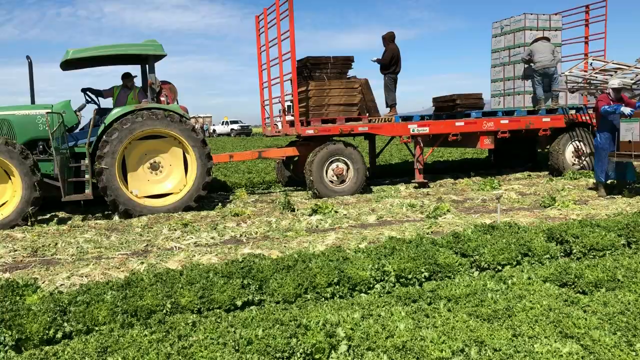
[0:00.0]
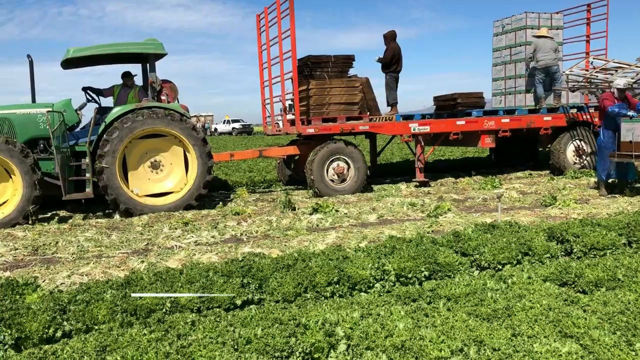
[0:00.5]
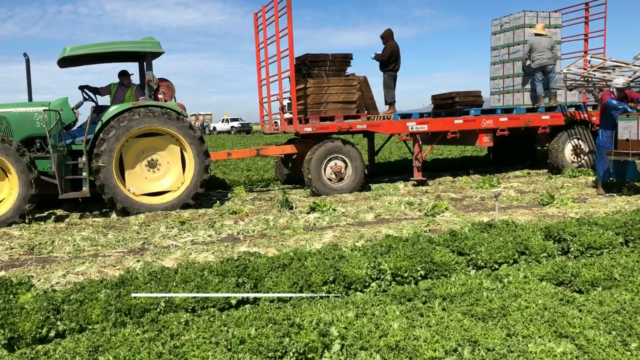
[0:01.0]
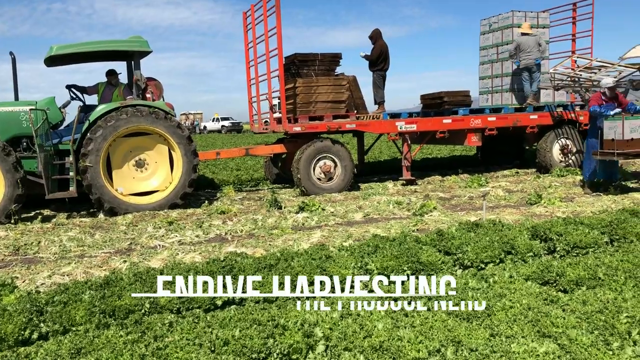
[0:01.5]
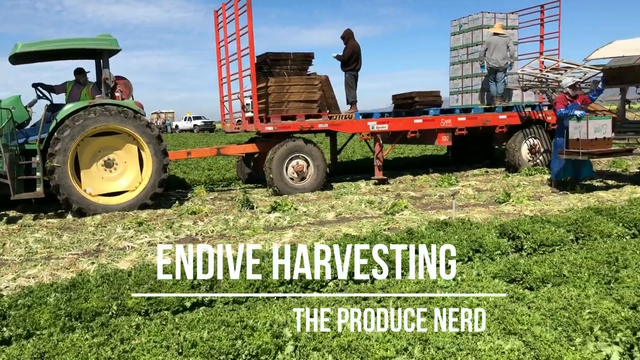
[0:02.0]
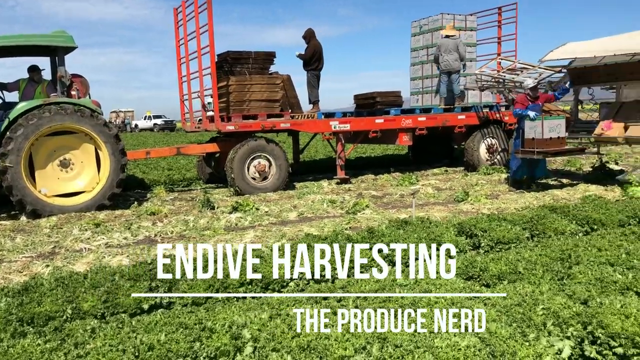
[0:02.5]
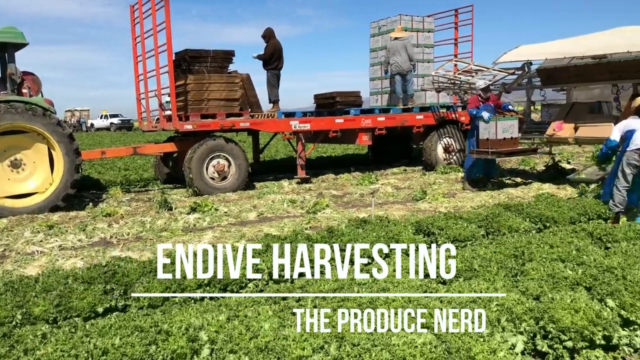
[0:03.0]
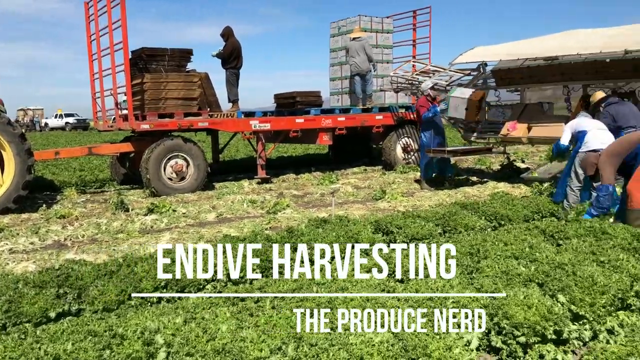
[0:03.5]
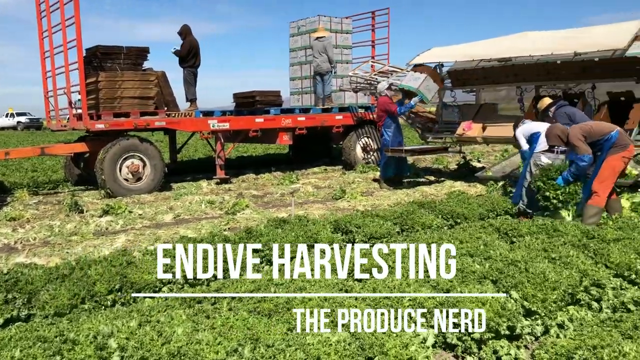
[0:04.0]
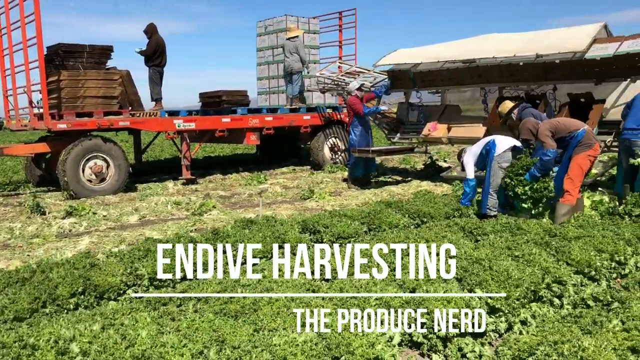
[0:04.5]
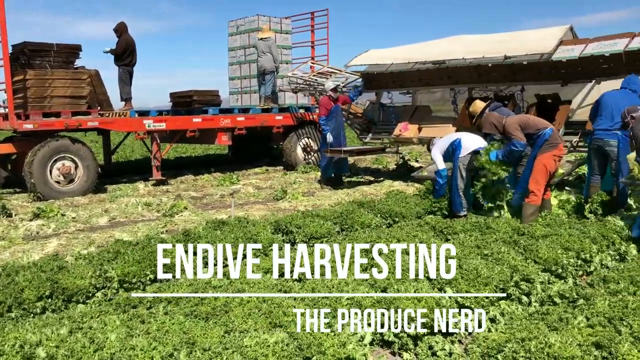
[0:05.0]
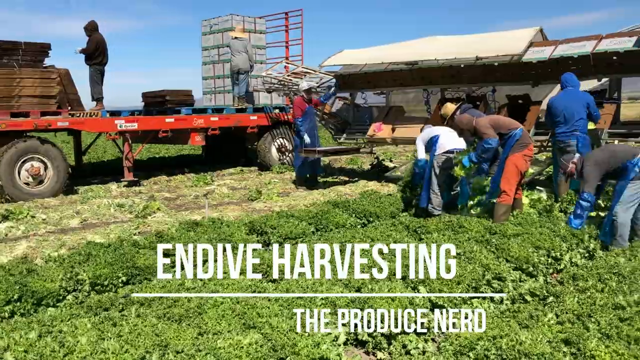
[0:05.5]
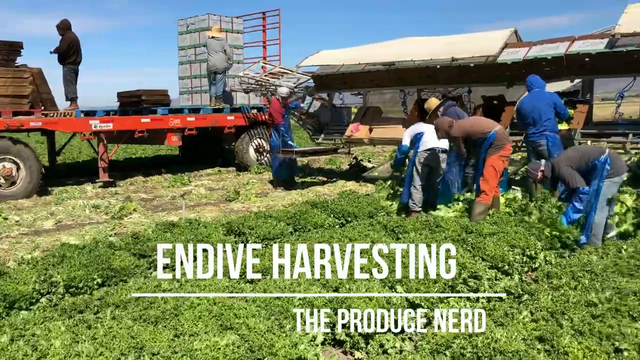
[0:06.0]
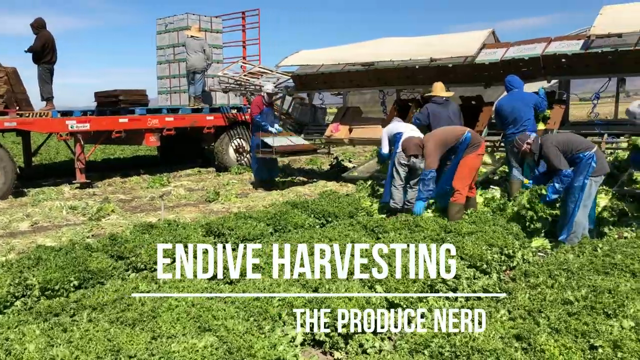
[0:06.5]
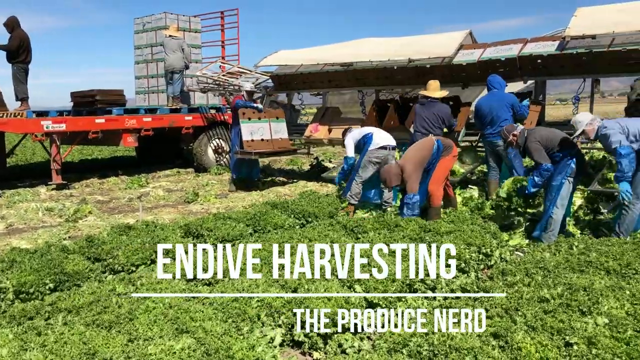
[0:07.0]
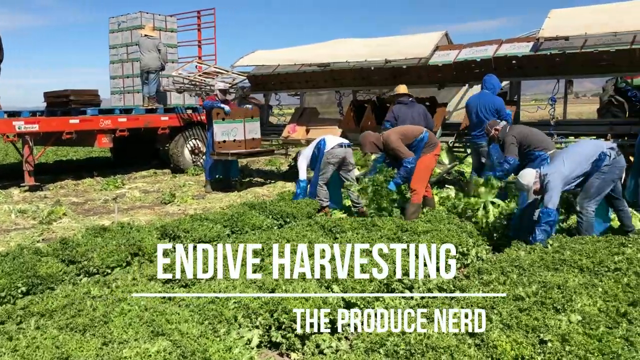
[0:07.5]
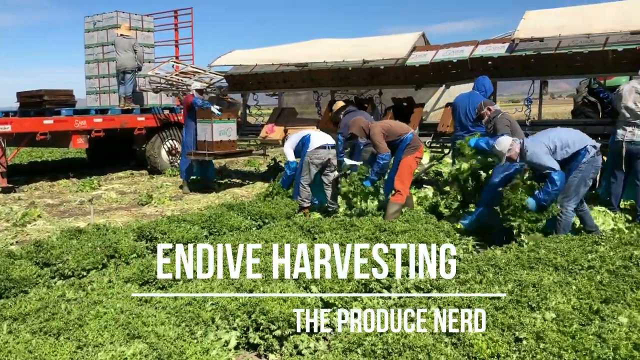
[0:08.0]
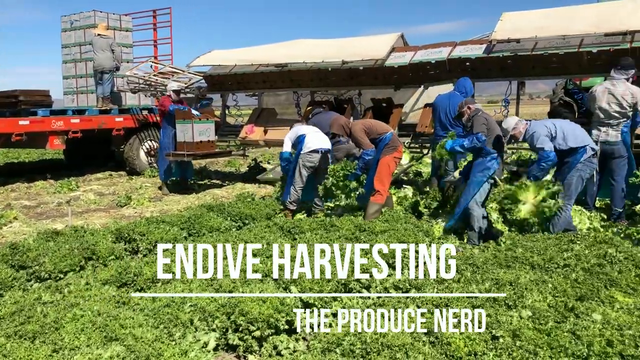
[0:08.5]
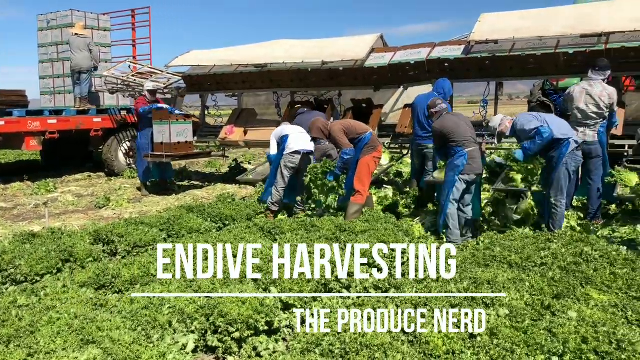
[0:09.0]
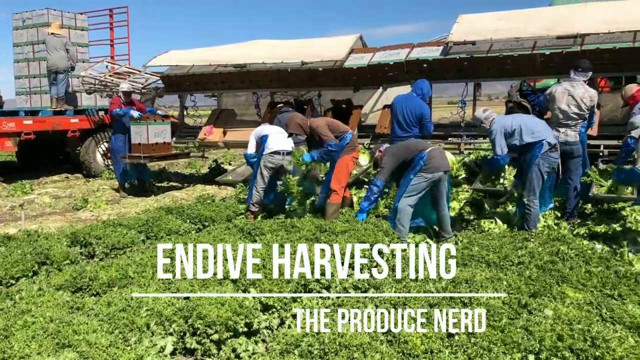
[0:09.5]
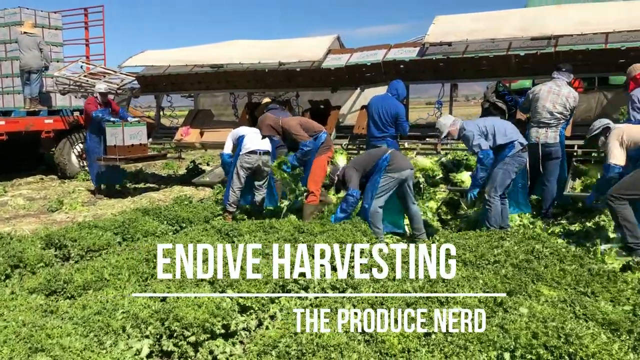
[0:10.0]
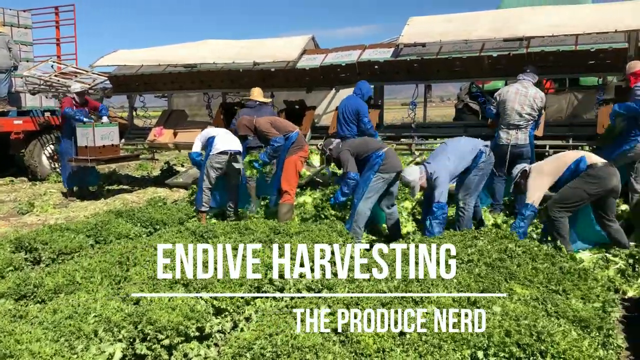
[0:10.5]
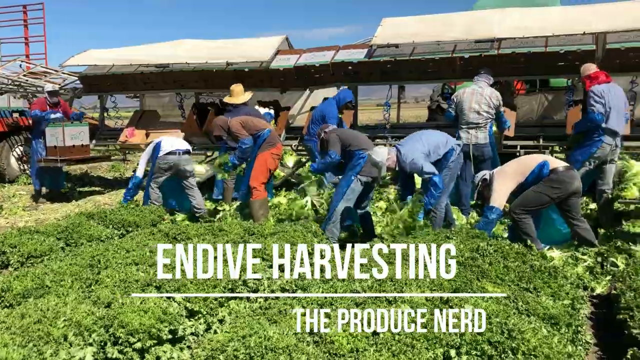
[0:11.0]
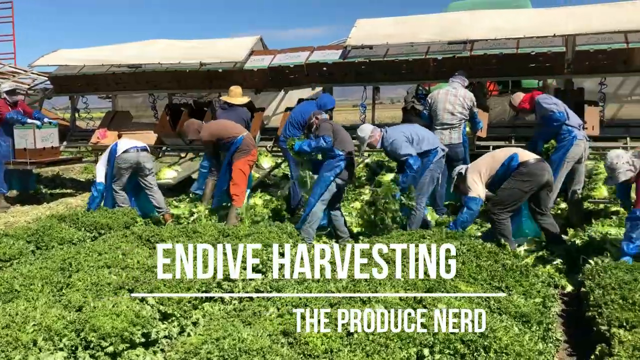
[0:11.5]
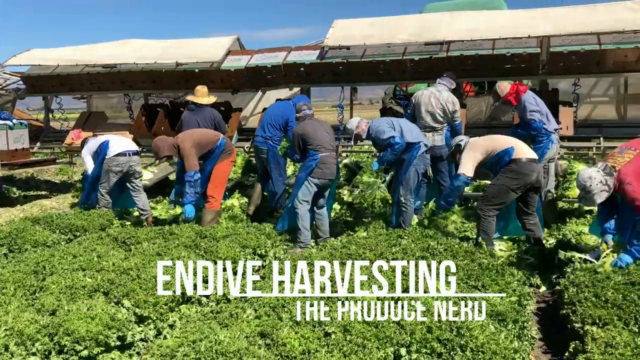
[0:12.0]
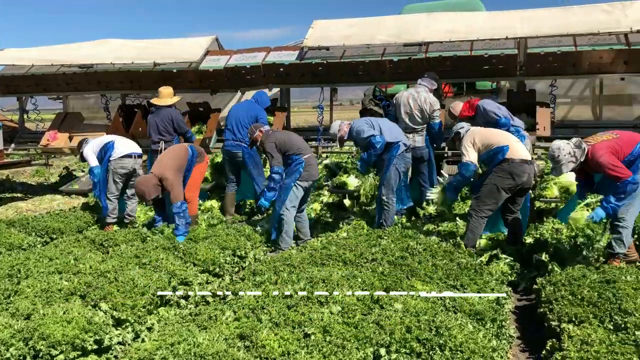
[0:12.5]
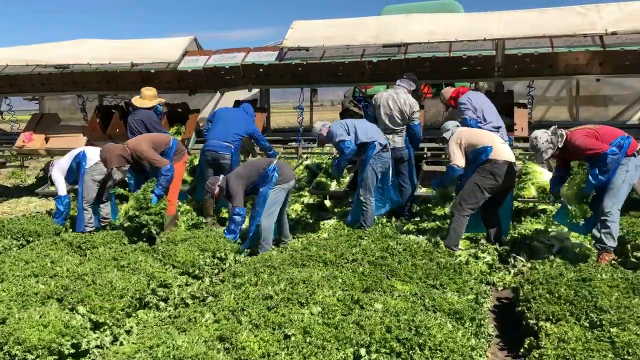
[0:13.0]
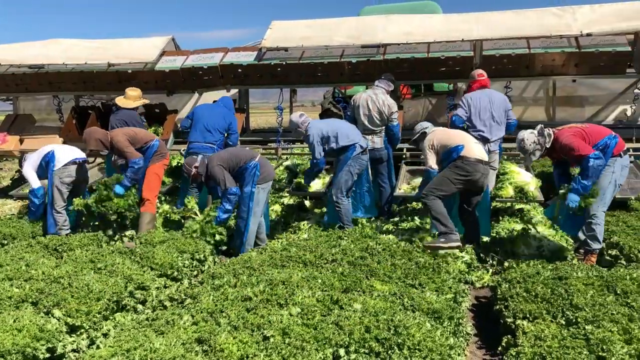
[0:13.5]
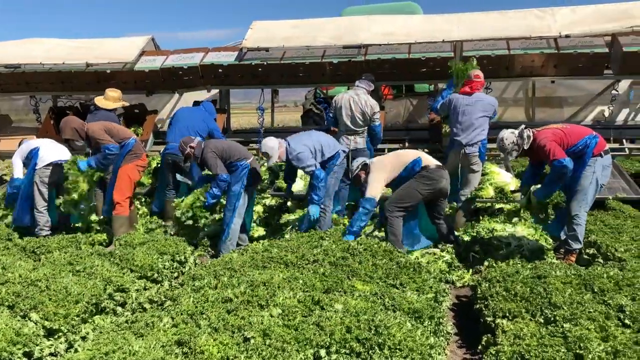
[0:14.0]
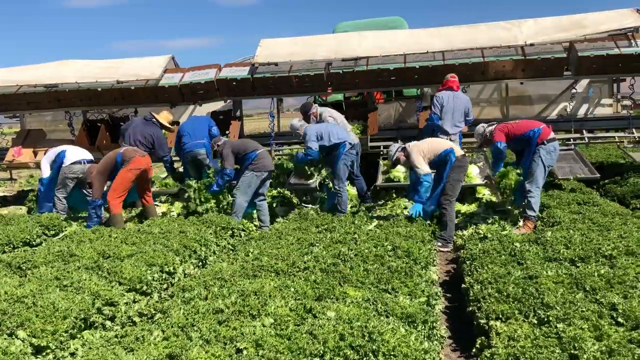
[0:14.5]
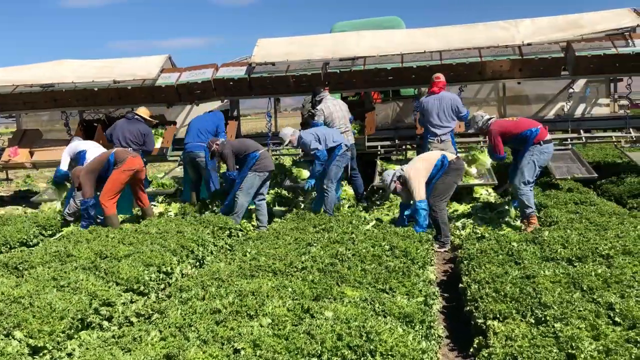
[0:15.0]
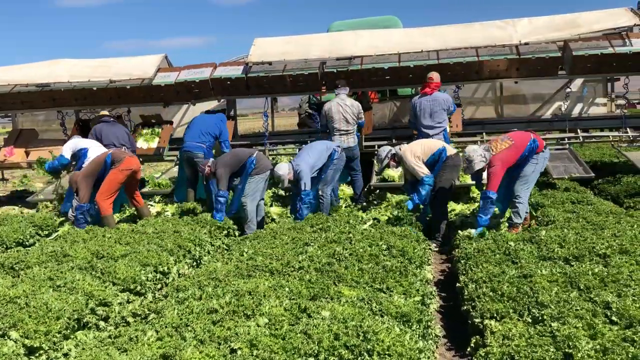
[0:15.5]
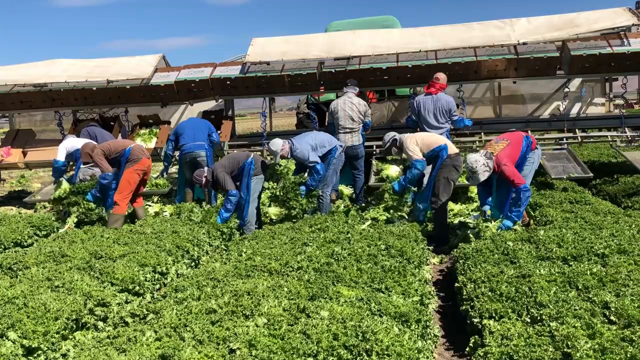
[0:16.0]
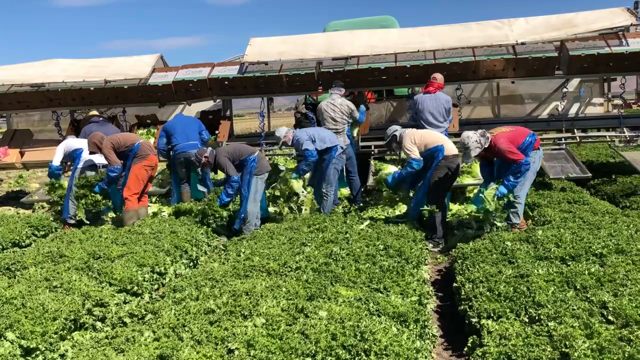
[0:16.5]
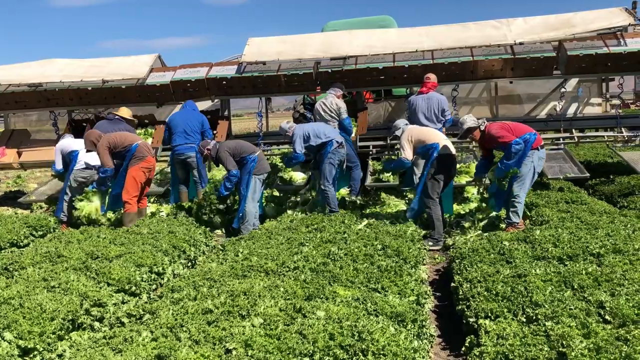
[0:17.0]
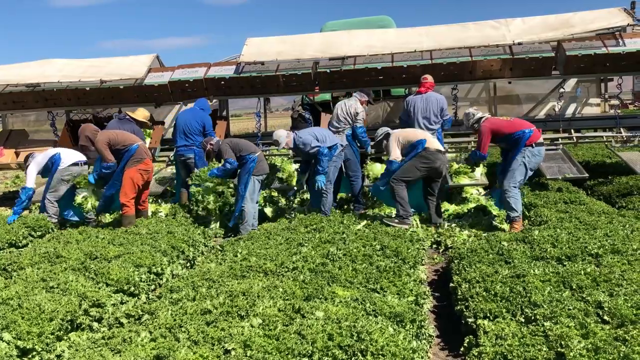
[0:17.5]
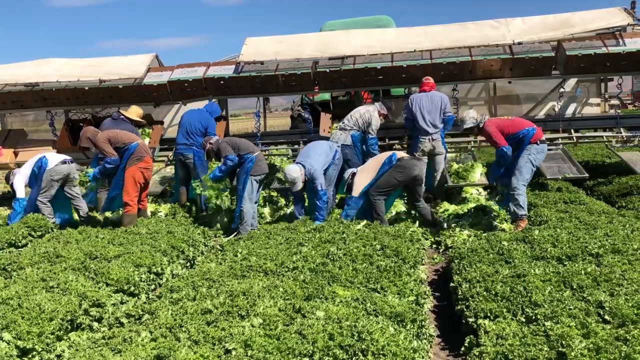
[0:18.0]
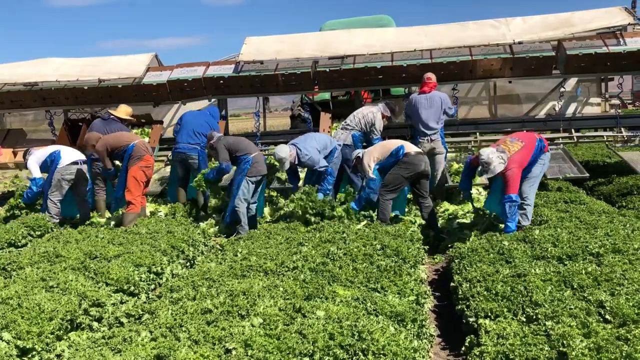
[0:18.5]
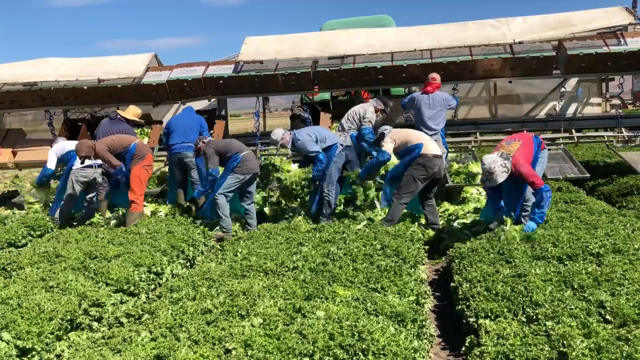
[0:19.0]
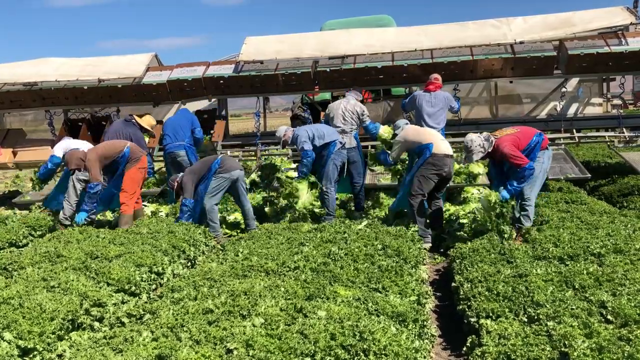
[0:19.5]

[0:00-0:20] The video opens on what appears to be farmland. A tractor with very large wheels has someone sitting in the driver's seat, and a very long trailer is behind it. The trailer has four wheels, its gates at the front and back are up, and what appear to be boxes and pallets are on top of it. Two people are on the trailer. Text at the bottom of the screen includes the words "Harvesting, the produce nerd". The camera pans to the right, showing more people carrying heavy objects; the people on the right side appear to be harvesting the plants, the greenery, from the ground. As the camera keeps panning right, more and more people appear until the screen is full of them. It zooms out slightly to show the people working, then remains still on them for a moment.